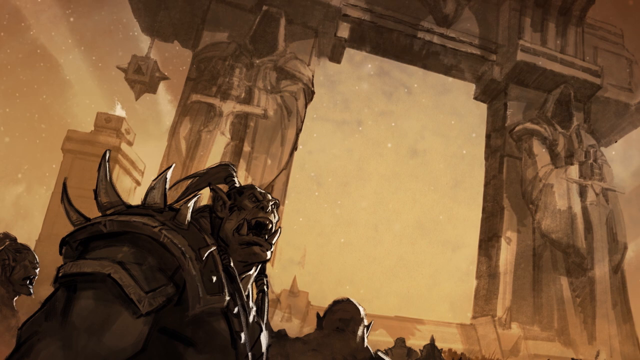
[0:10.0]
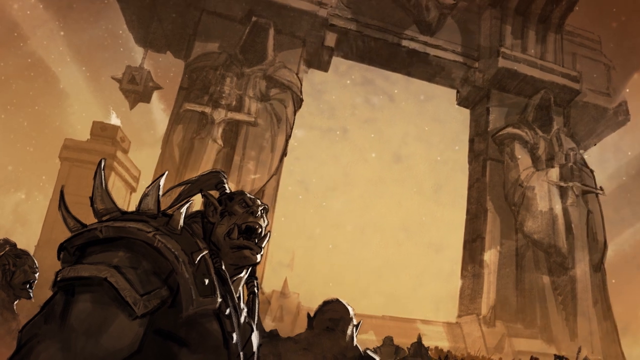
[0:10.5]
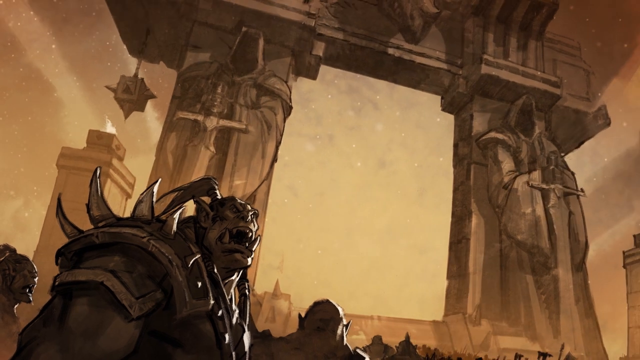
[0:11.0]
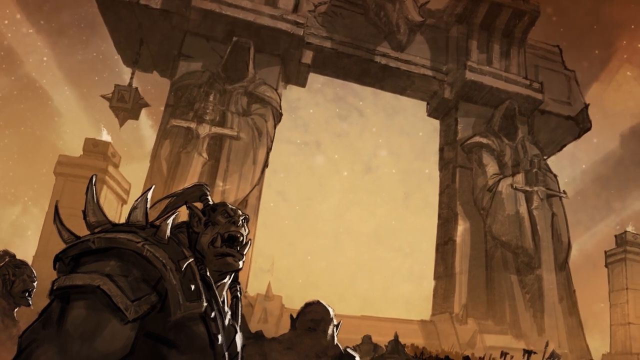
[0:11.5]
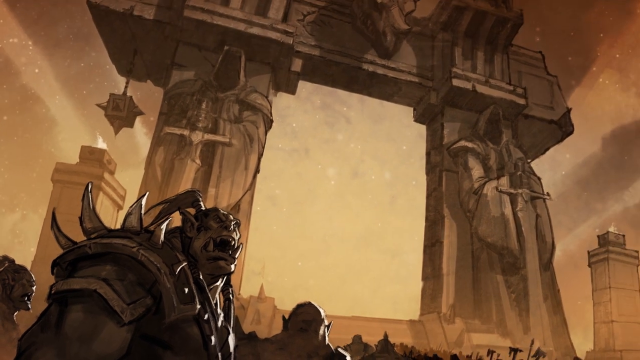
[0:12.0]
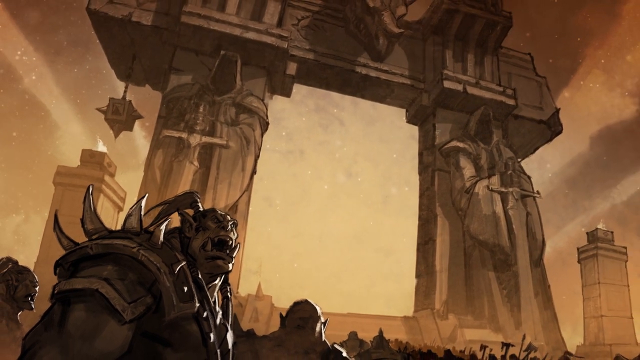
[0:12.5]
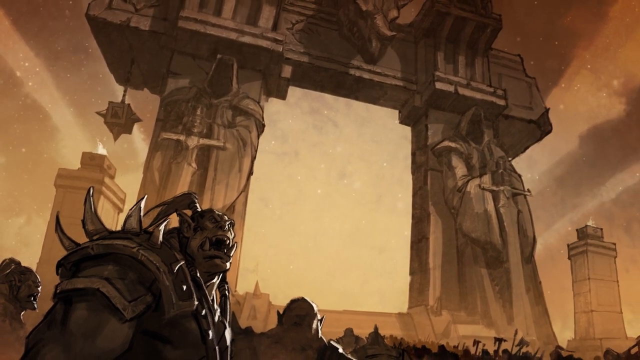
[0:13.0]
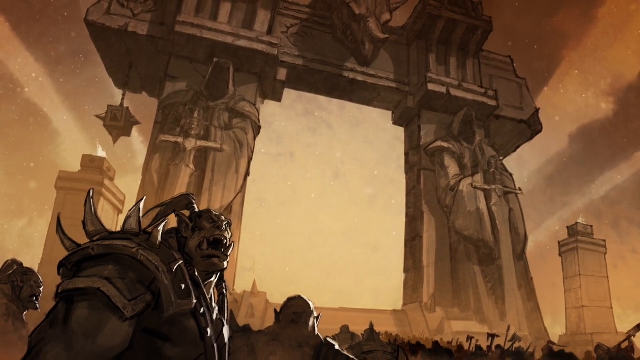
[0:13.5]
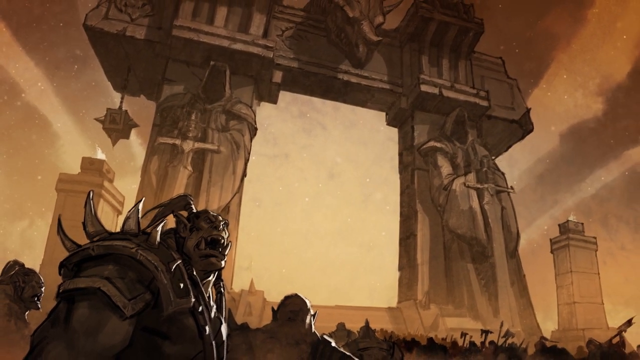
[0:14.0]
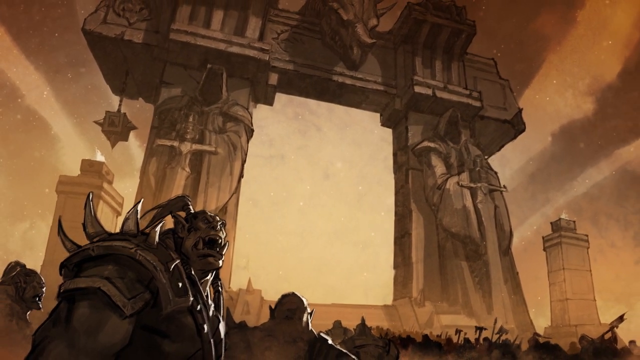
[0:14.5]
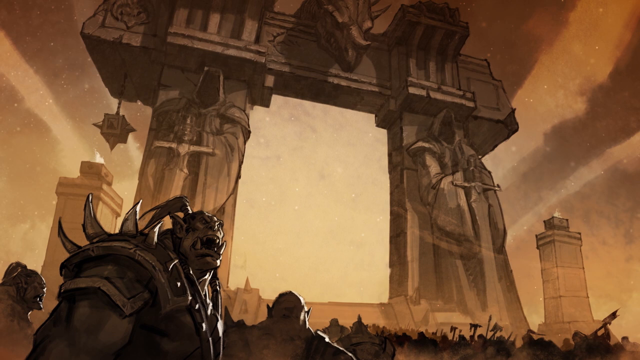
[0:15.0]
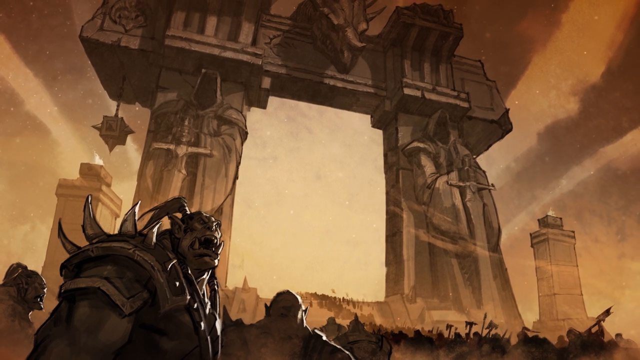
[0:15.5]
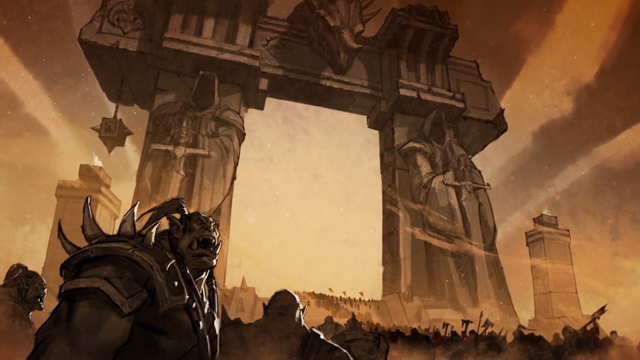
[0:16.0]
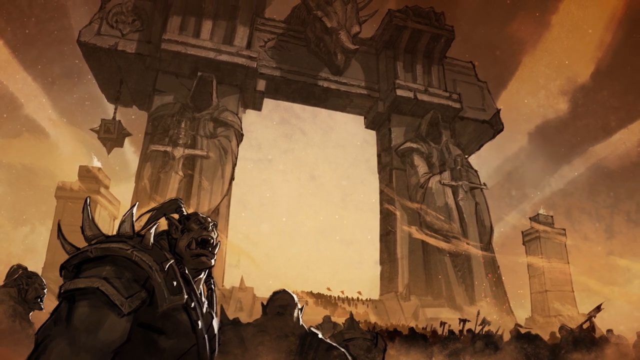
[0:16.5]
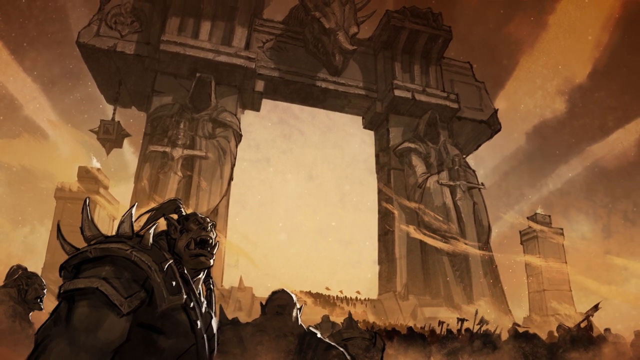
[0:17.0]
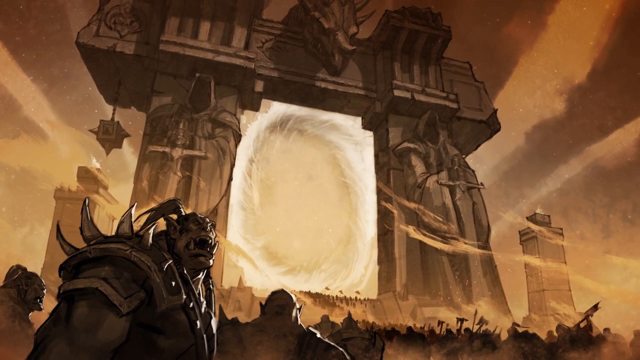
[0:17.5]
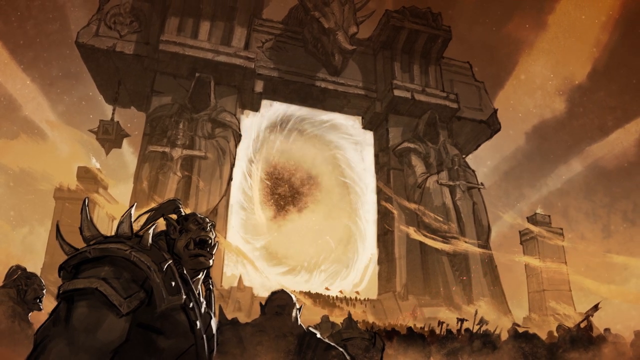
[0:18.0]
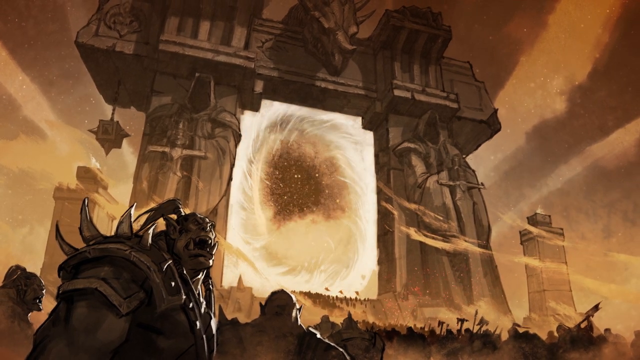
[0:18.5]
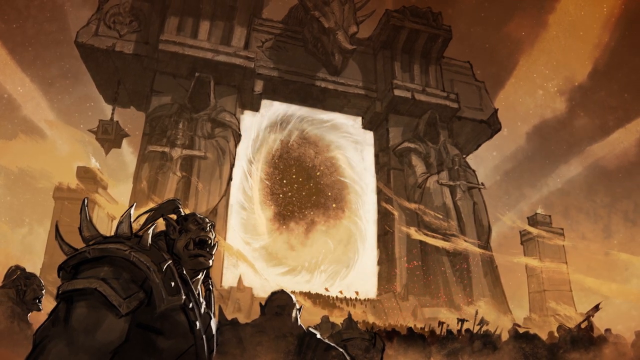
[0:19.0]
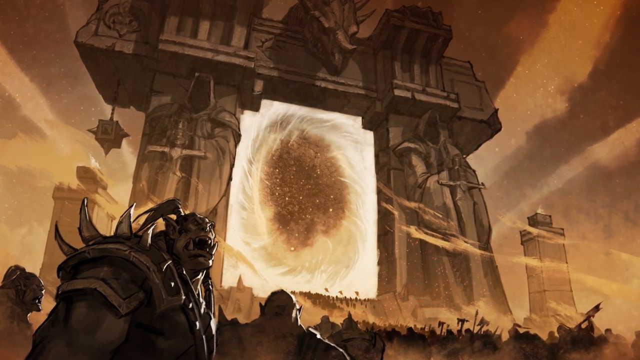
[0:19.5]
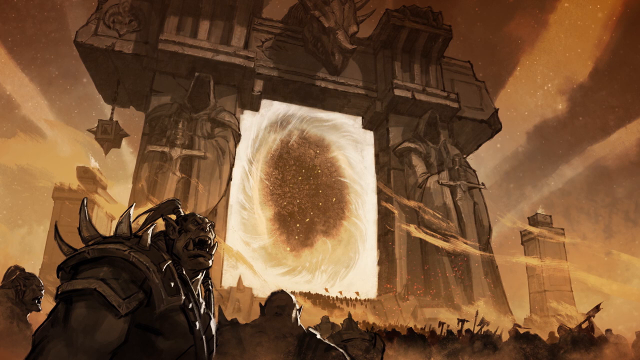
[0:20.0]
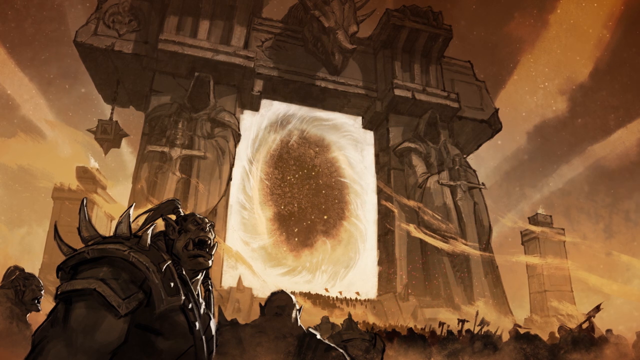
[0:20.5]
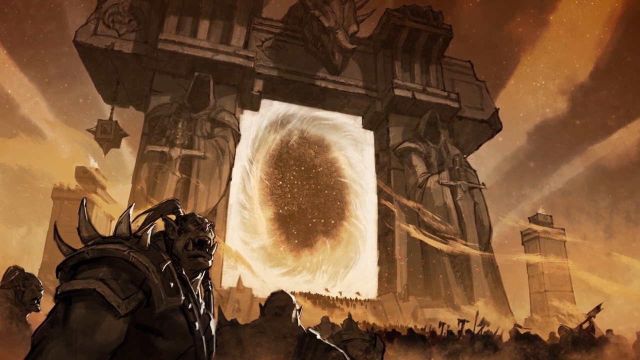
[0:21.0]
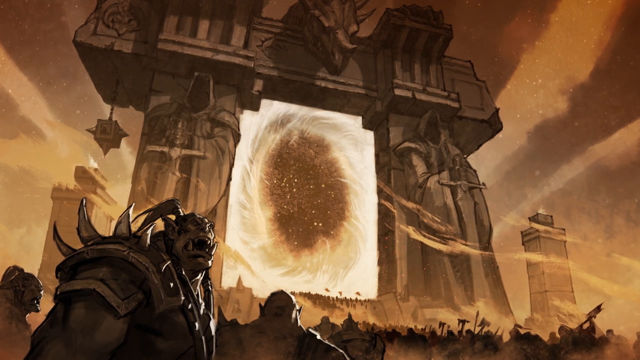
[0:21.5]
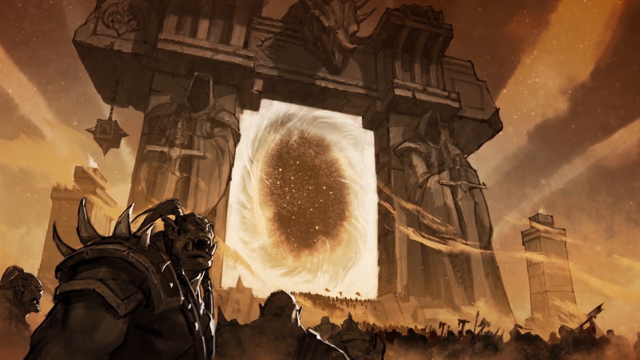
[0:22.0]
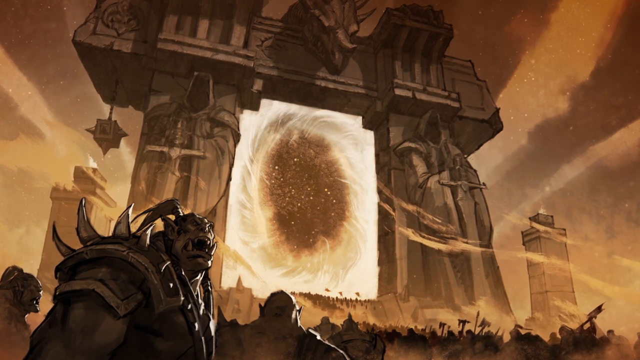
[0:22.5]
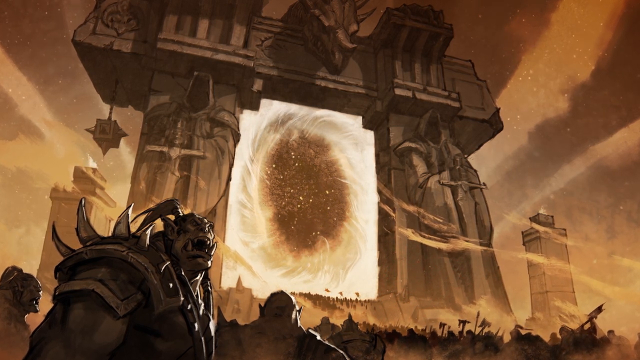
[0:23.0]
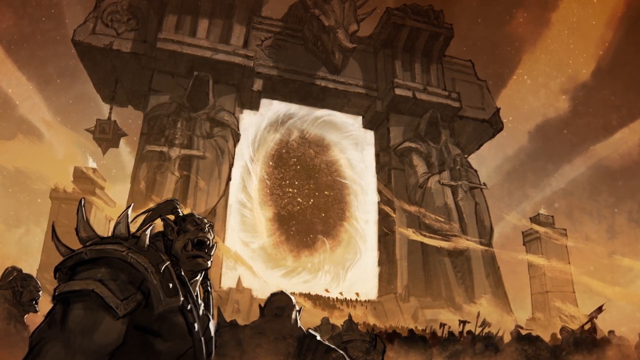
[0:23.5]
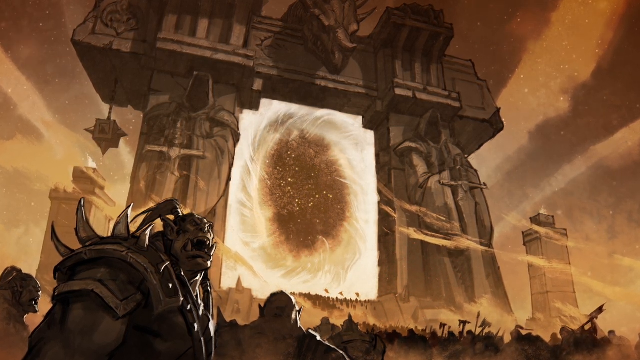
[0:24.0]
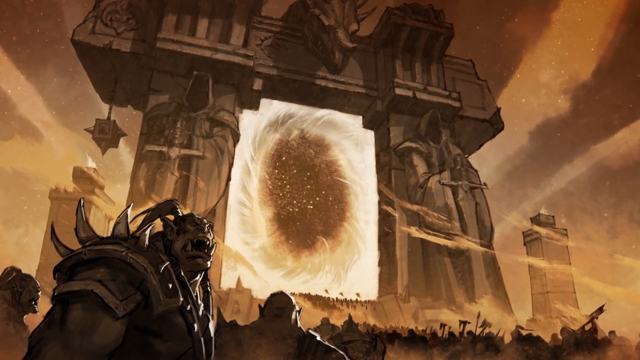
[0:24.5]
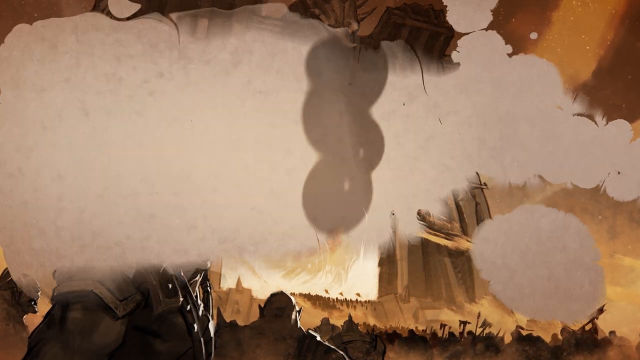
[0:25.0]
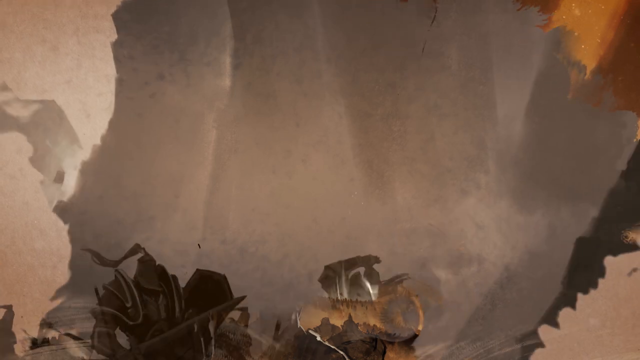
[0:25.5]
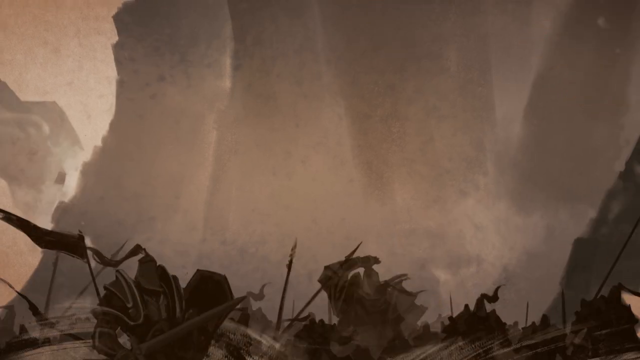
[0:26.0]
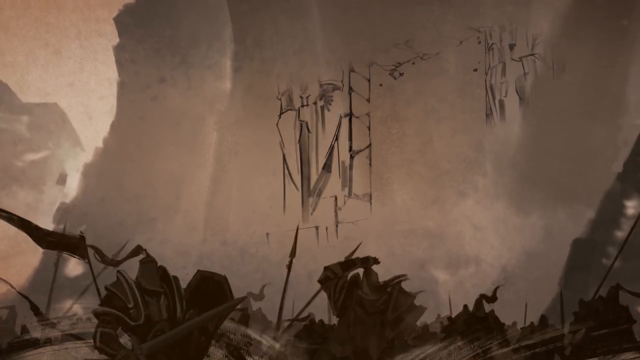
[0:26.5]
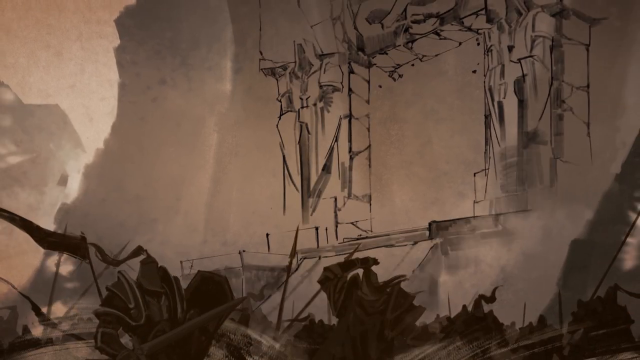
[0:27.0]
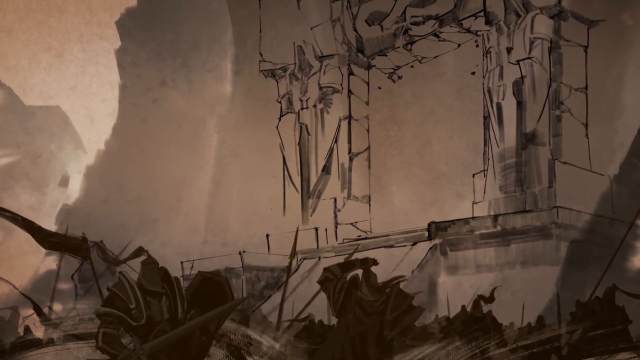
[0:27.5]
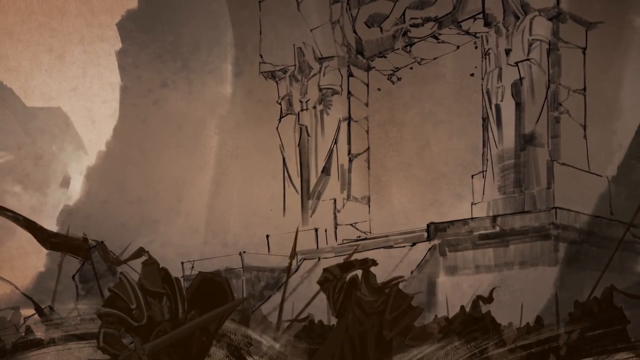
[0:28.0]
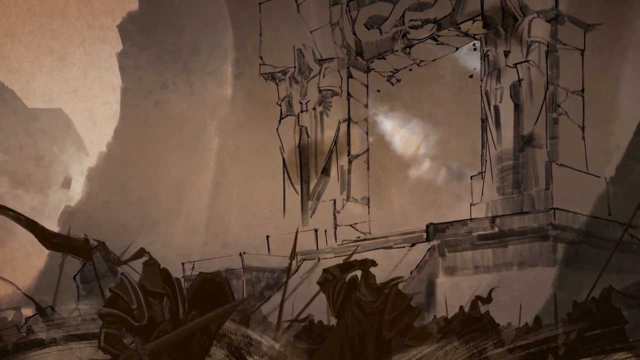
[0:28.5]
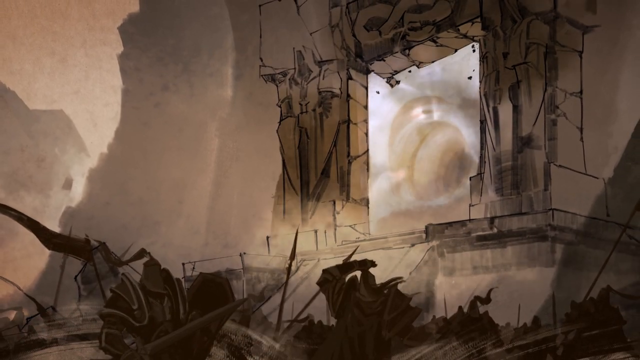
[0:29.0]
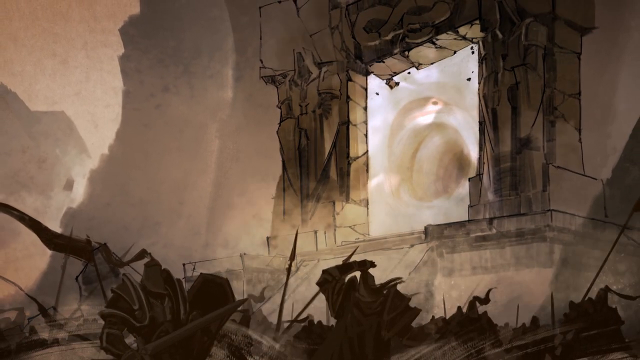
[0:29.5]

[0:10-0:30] A ground view looks up at the portal, or gate, which is massive, maybe 30, 40, possibly even 50 feet tall. The two statues are on each side of the portal with their swords pointing down. There looks to be some type of animal or dragon head on top in the middle of the portal. On the sides of the portal are giant pillars with fires on top of them. From the ground view, hundreds of people, different players, races or characters, are there. The portal then opens, the door itself becoming a big swirly, sci-fi-like portal, its circular part showing dark, starry things inside. It twinkles a little and something seems to be moving. The same sand effect then brings in a new scene, also a ground view of the portal: the portal is still open, and the bodies and armor of the people who were there are visible, like a bloodbath in which a lot of people died.